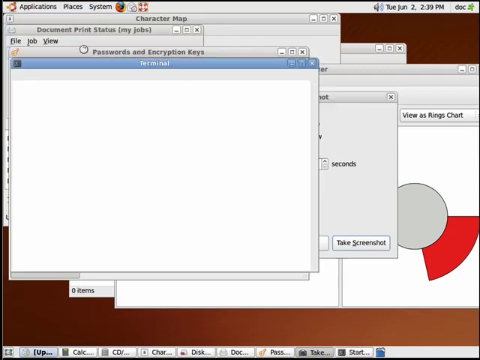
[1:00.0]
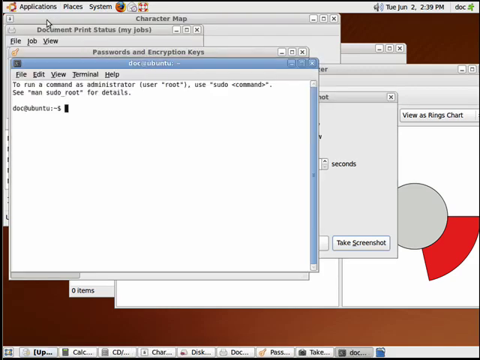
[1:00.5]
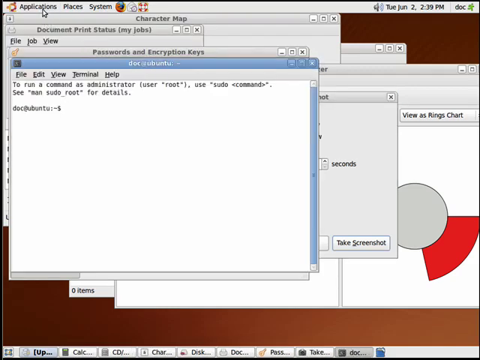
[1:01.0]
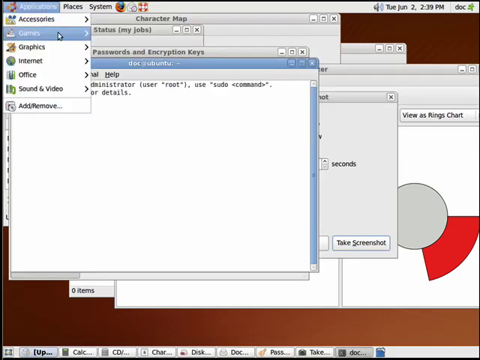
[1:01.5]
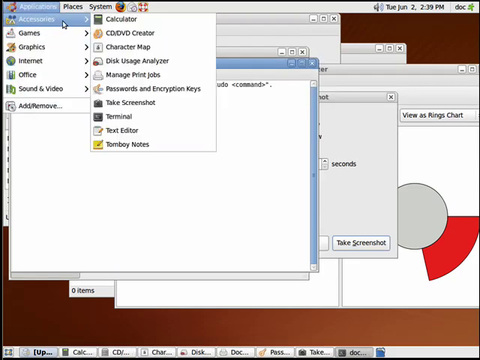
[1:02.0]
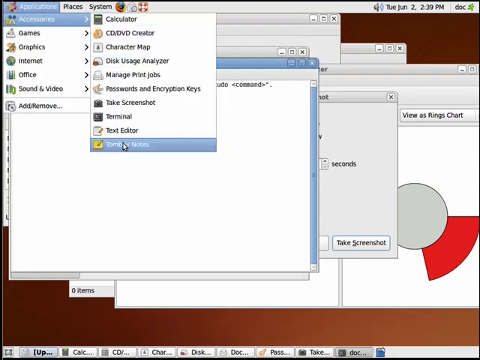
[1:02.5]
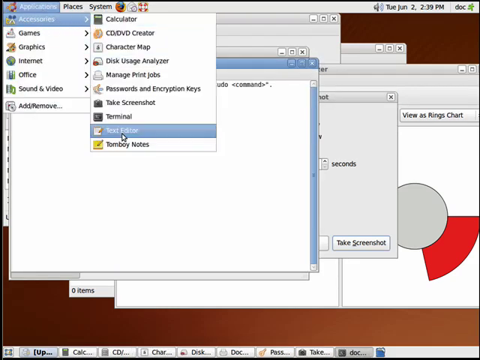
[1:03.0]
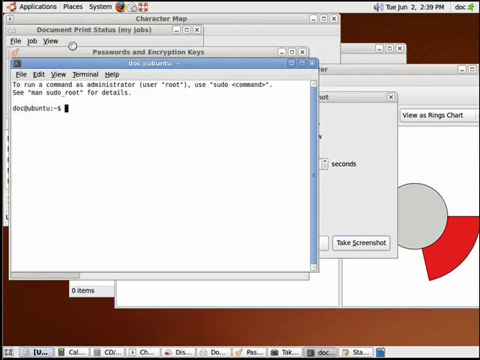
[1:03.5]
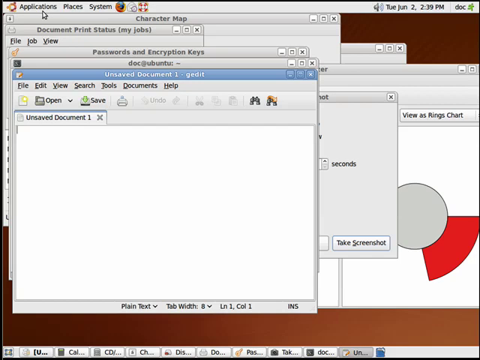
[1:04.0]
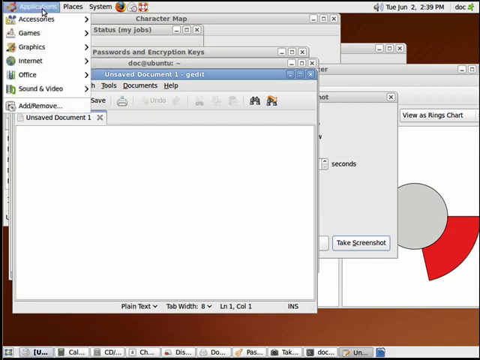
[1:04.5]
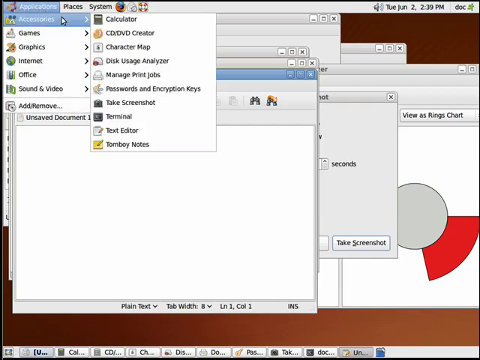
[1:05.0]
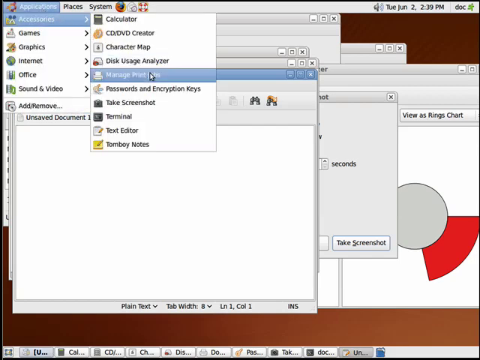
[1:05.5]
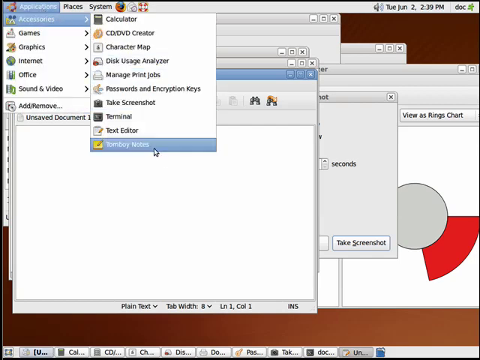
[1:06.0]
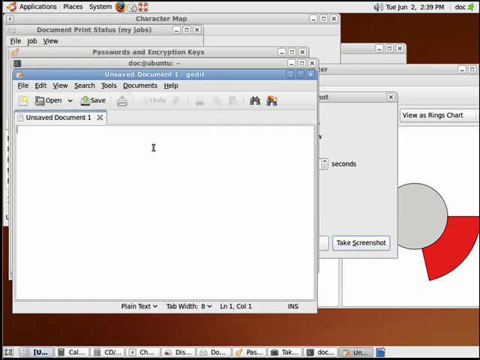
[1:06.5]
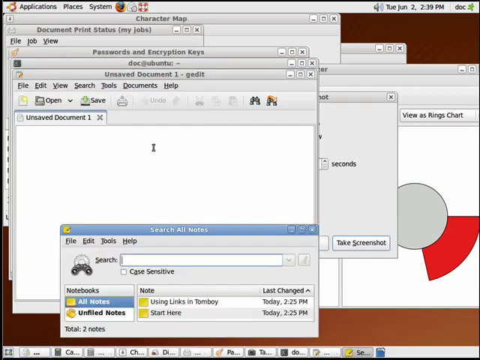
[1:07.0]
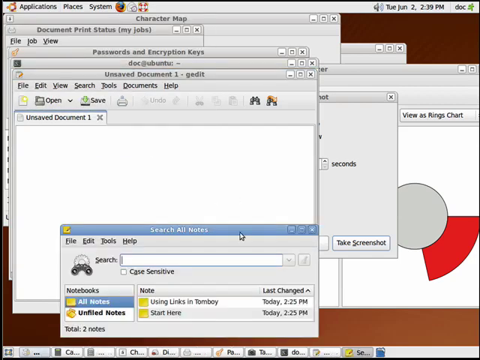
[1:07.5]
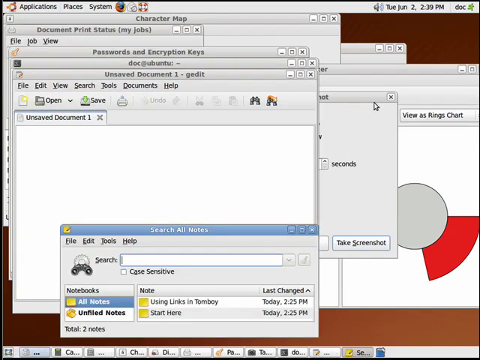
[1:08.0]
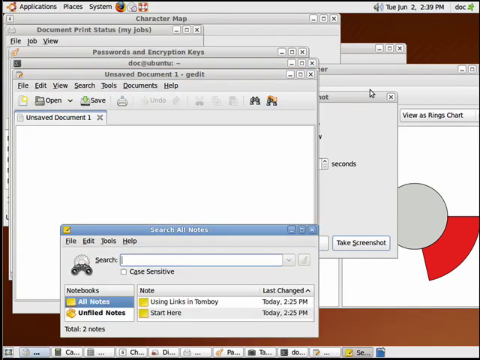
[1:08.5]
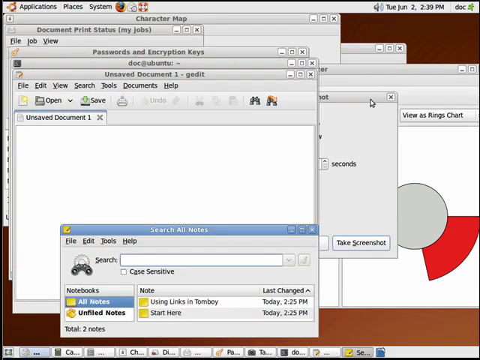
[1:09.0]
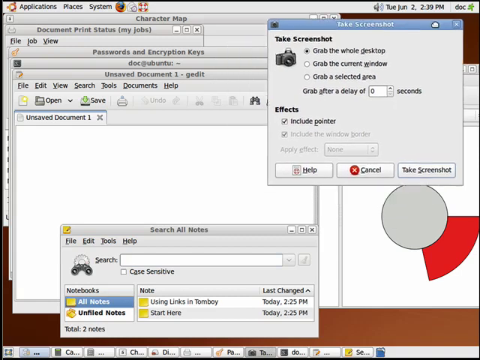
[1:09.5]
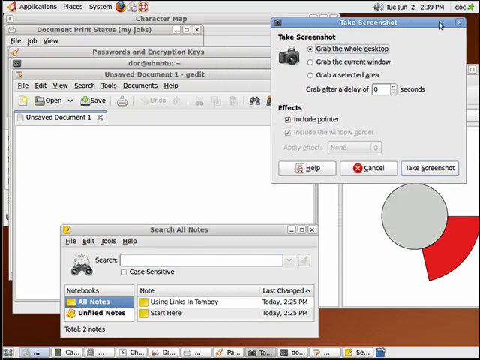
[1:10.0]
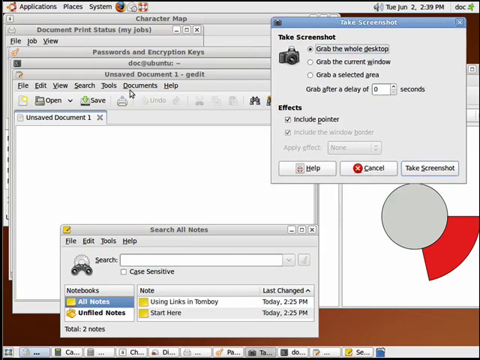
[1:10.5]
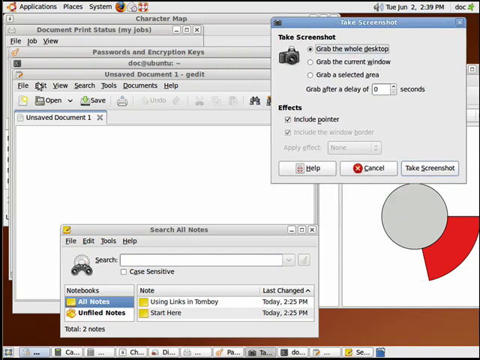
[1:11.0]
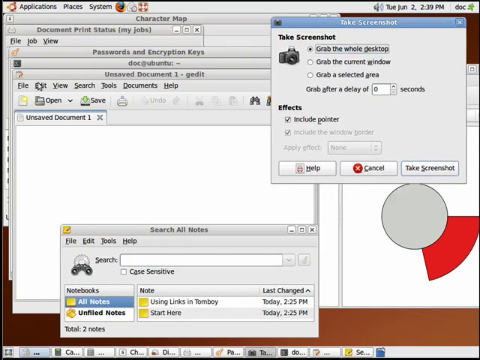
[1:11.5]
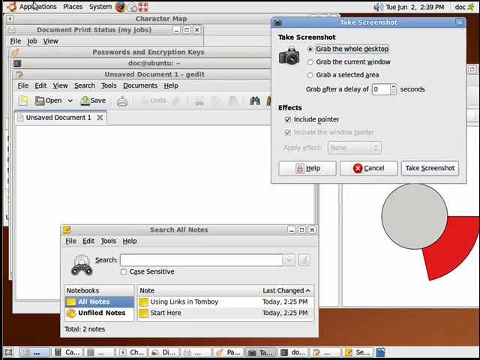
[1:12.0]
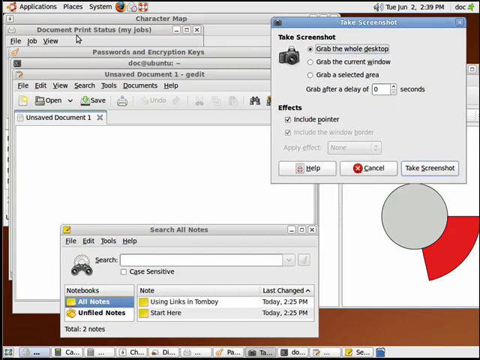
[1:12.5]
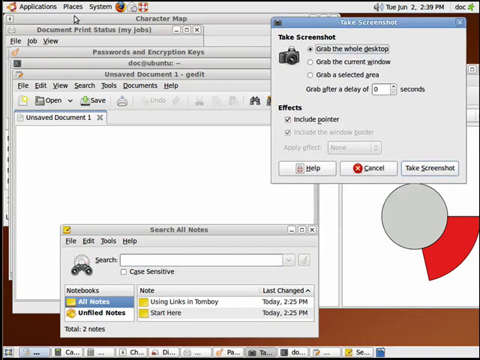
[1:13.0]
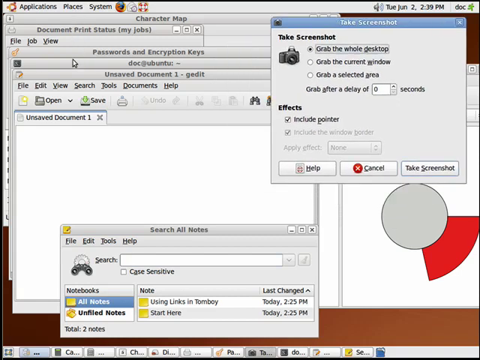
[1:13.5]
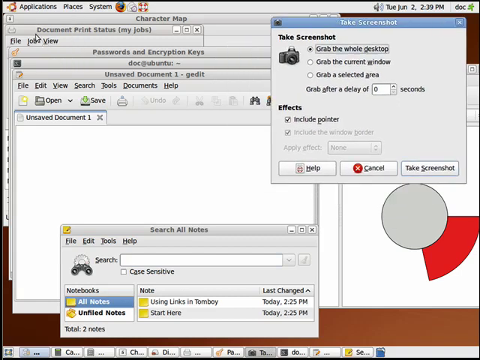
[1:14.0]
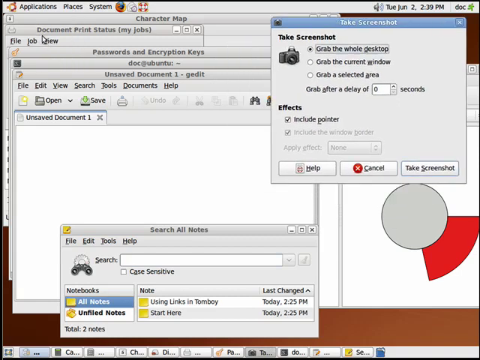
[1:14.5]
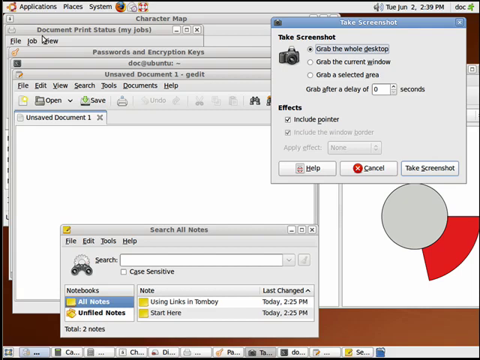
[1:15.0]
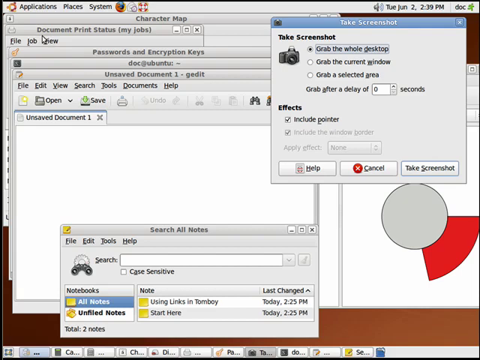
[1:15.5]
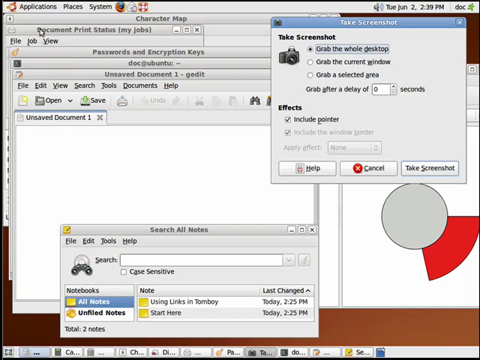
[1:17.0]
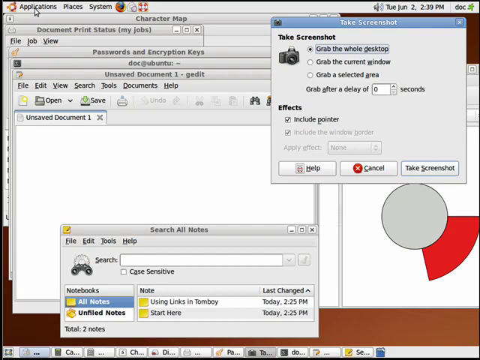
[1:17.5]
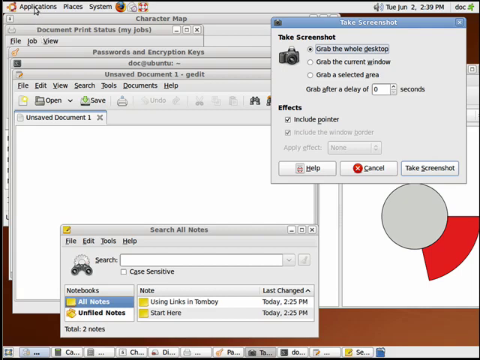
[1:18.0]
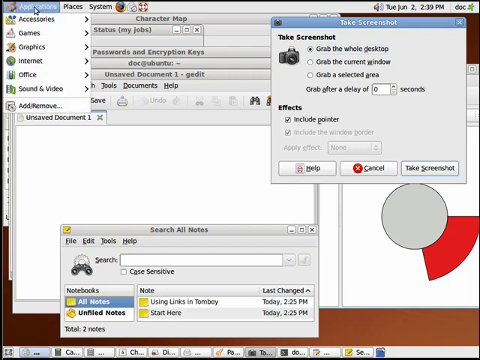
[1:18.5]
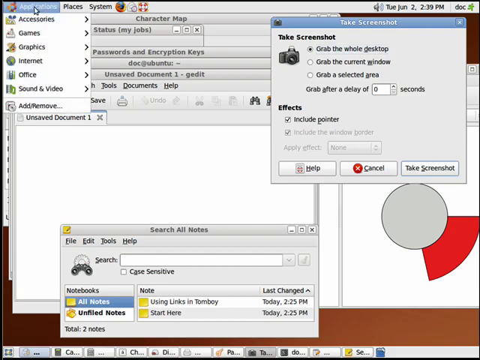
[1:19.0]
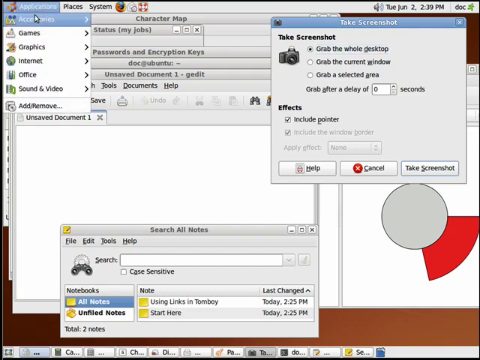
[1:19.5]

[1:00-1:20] The person has opened a whole bunch of windows, mostly by clicking on Accessories: a character map, Take Screenshot, Search All Notes, and some type of graph that is not a pie chart. They then move to Graphics, hover over F-Spot Photo and GIMP Image Editor without choosing them, and go to Office, where options include Dictionary and Evolution Mail and Calendar. They move on to Sound and Video and then to Rhythm Box. Many different applications appear to be open at the same time.